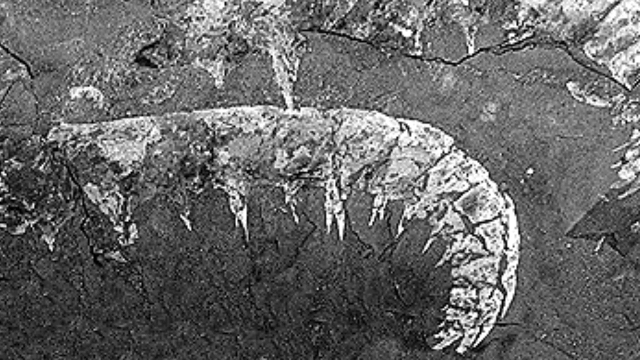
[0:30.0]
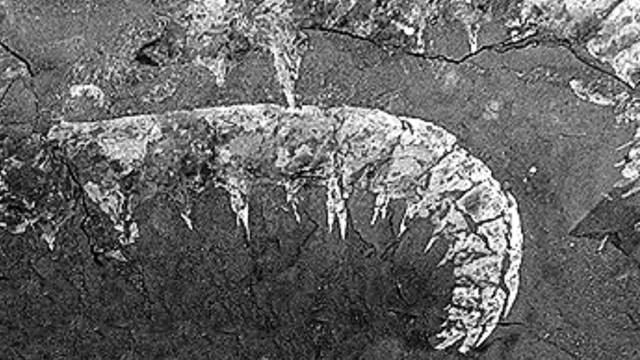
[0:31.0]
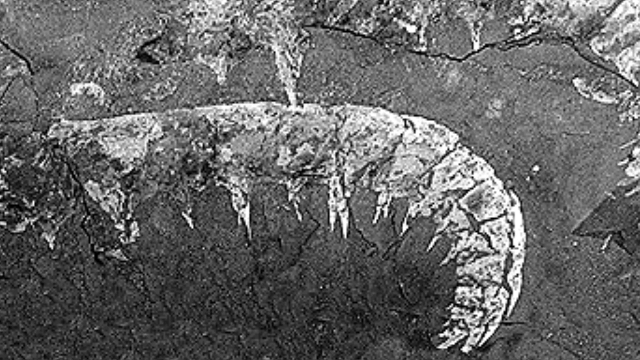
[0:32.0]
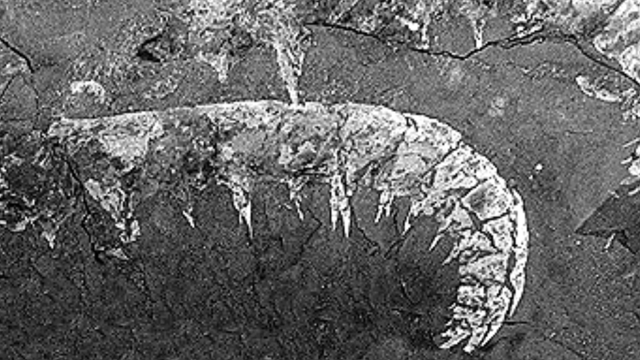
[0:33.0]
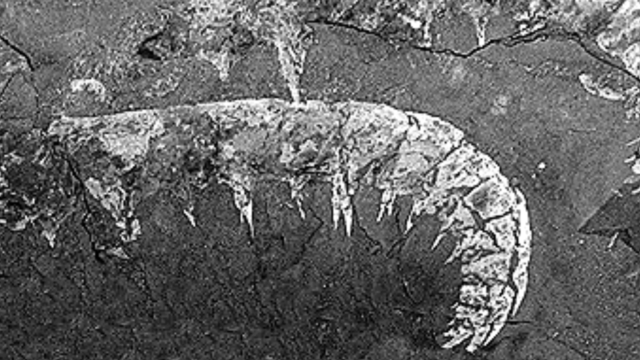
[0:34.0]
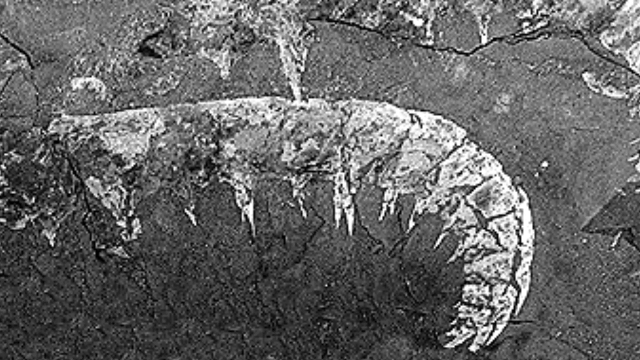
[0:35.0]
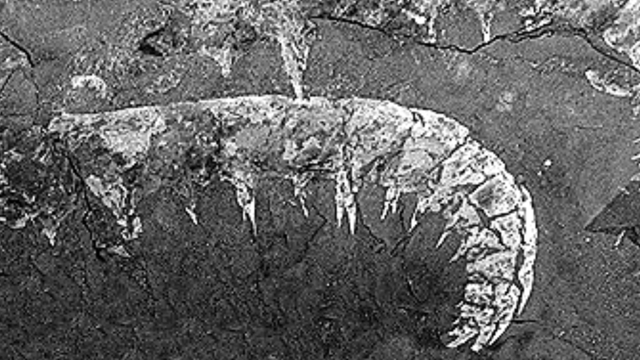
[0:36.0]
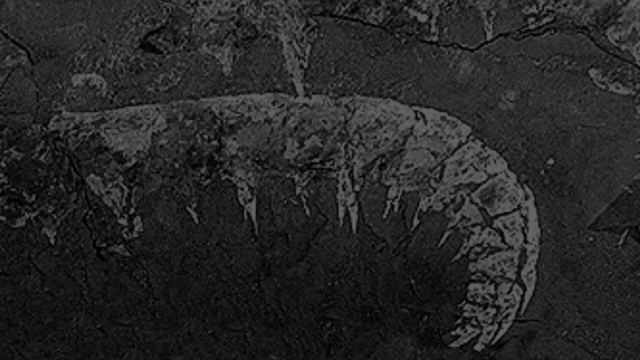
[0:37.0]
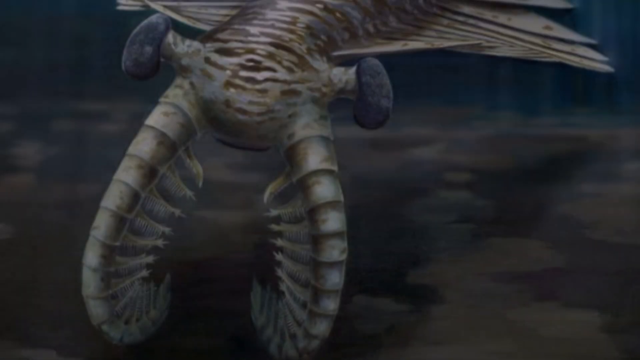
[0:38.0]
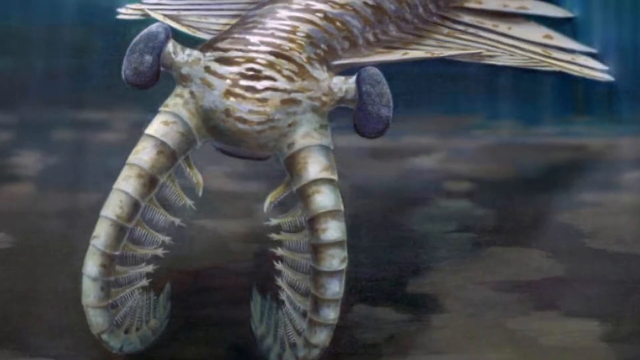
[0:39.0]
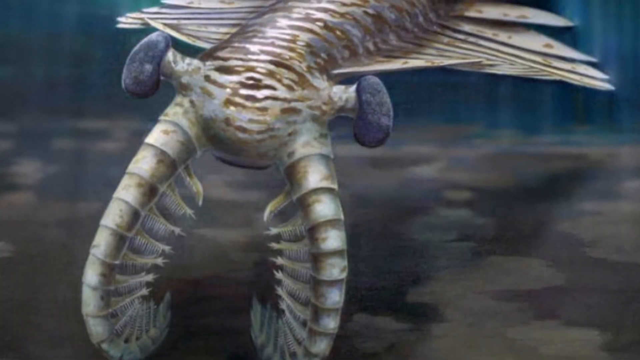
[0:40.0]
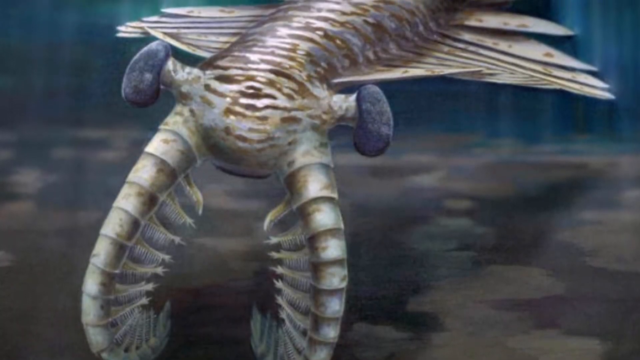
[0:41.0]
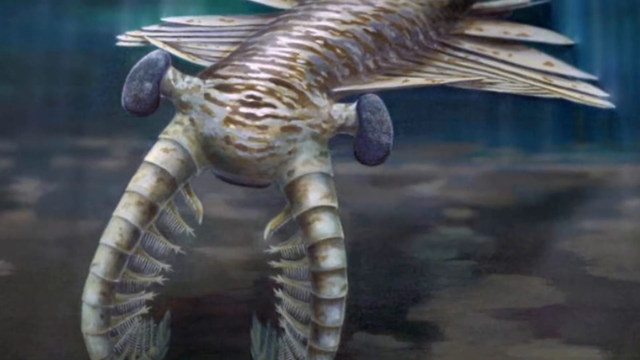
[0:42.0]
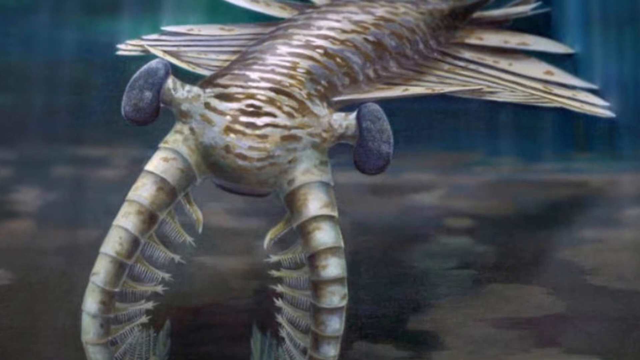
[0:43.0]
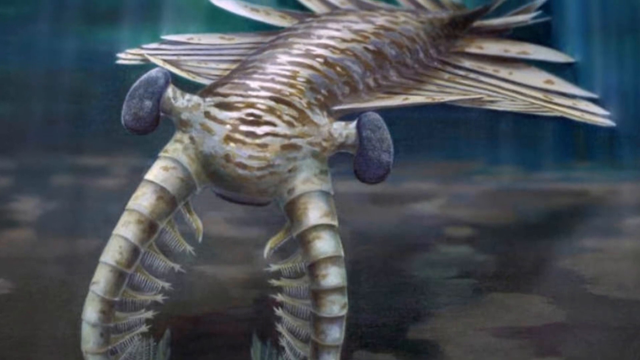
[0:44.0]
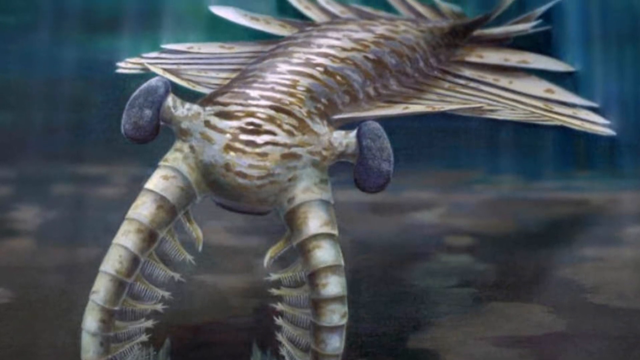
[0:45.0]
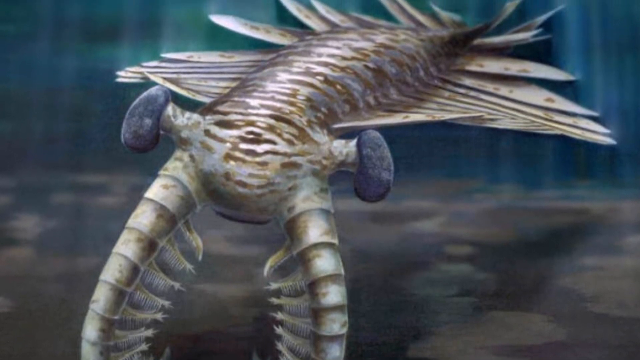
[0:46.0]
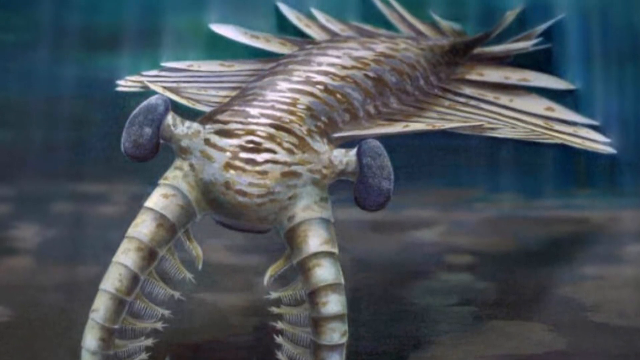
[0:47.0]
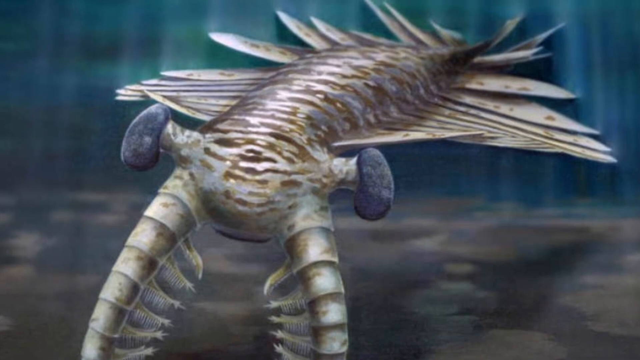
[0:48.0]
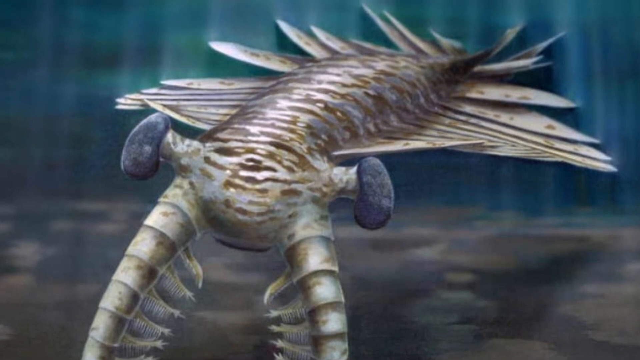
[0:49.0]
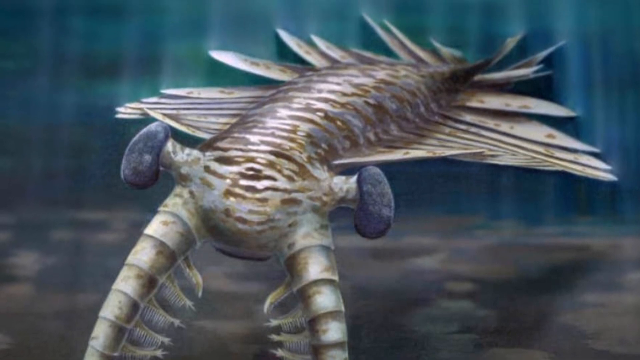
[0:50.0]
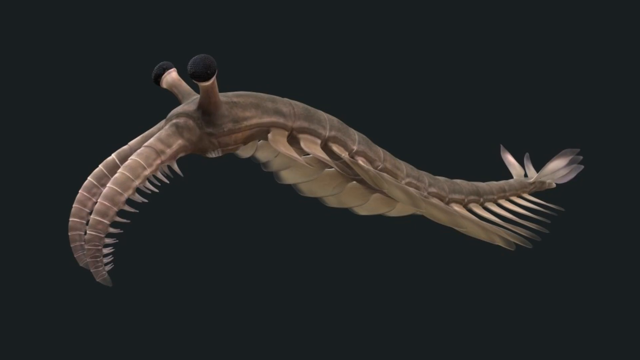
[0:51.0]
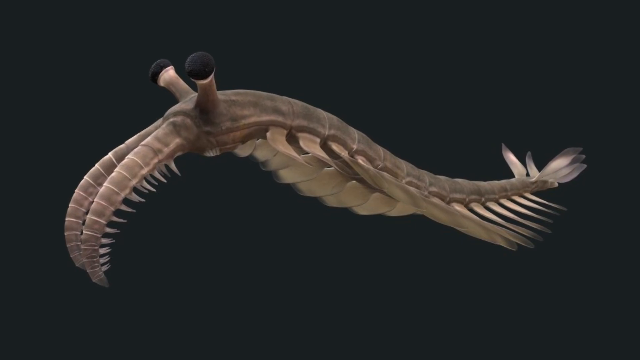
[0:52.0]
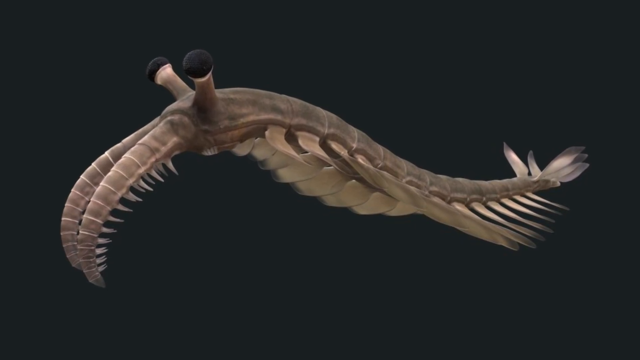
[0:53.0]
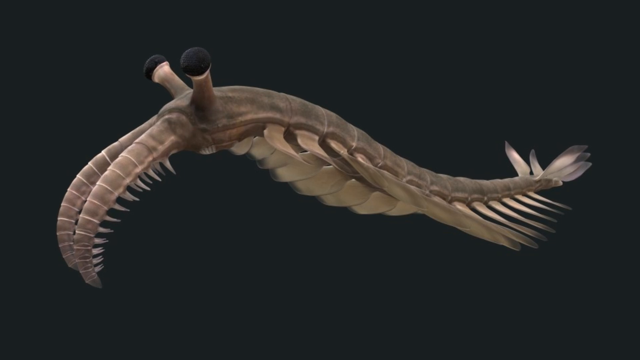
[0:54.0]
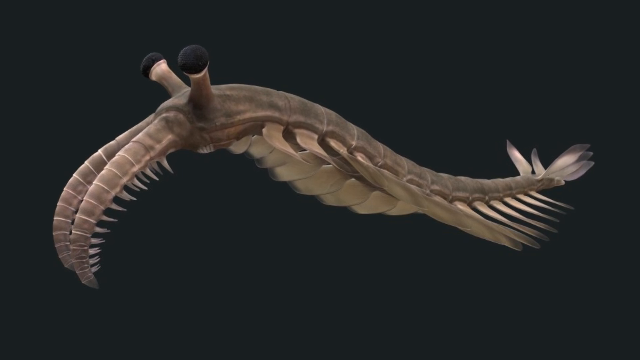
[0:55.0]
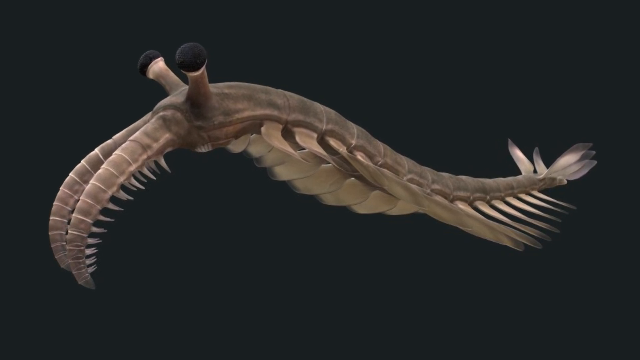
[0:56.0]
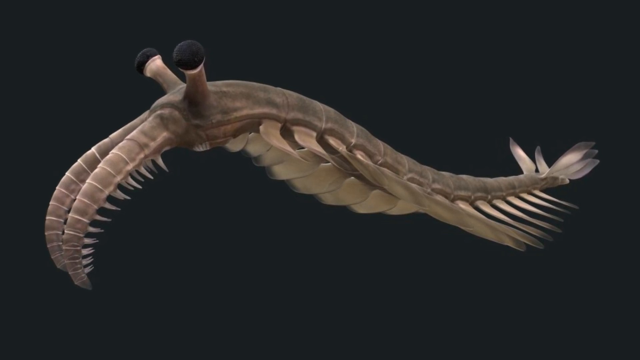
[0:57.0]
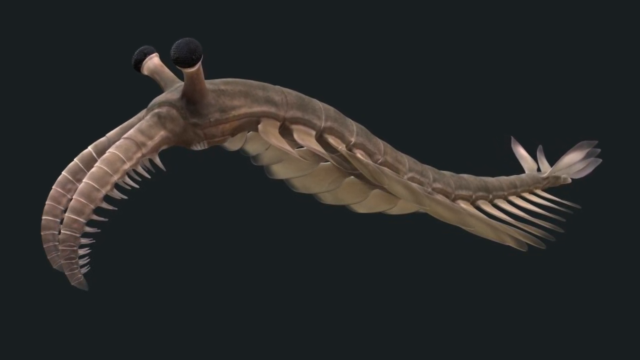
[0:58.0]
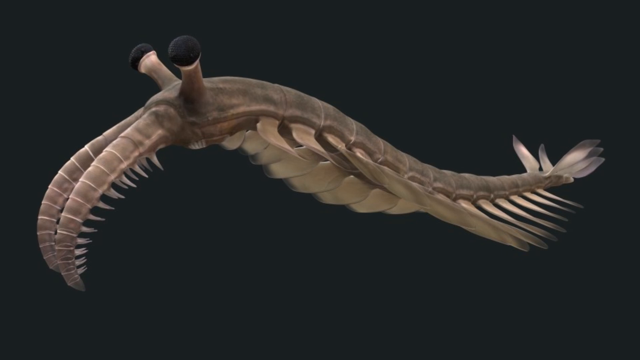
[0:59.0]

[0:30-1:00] The close-up view of the lower centipede fossil continues. The centipede that was at the top is now mostly out of the shot, with only about a quarter or less of the bottom portion of its body and a little of its legs visible. The scene then changes to what is perhaps a sea creature. It looks like some sort of amphibian, with lots of legs attached to either side of its body and a short pointed tail. Its head seems to have two tentacles attached to stems on either side, with lavender bean-shaped eyes, though this is uncertain. It also looks like it has two arms growing from its face, or perhaps fangs, with white tentacles hanging beneath them. The setting looks like the bottom of the ocean, with the ocean floor visible and the water flowing in the background. Next, another sea creature appears, this one apparently turquoise. It has lots of legs attached to either side of its body, a tail made up of at least five sections, and two long horns growing from its face with tentacles growing from beneath them. Two eyes, made up of two round black balls, are attached to stems on top of its head.